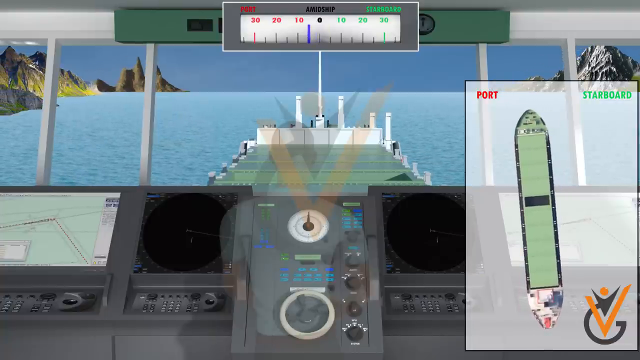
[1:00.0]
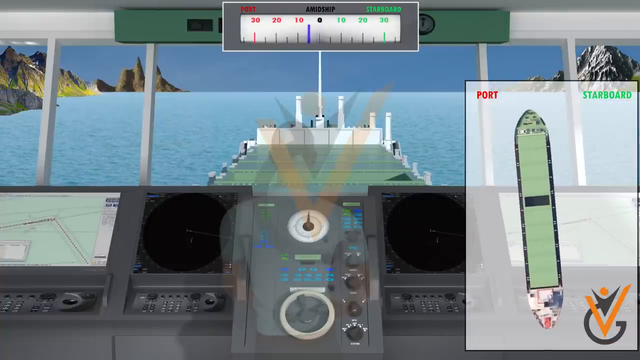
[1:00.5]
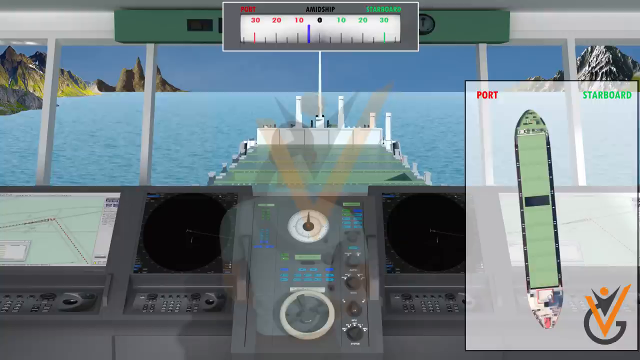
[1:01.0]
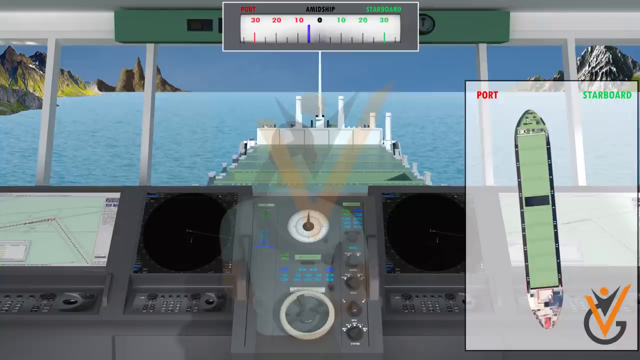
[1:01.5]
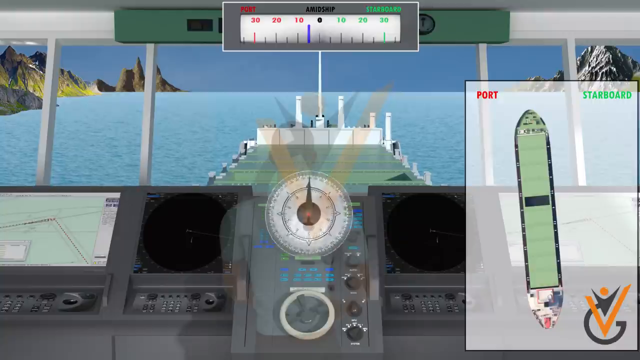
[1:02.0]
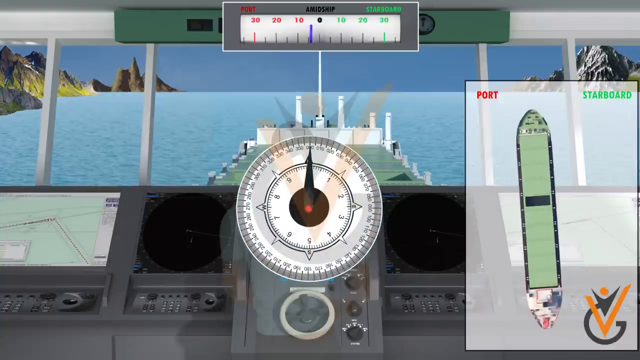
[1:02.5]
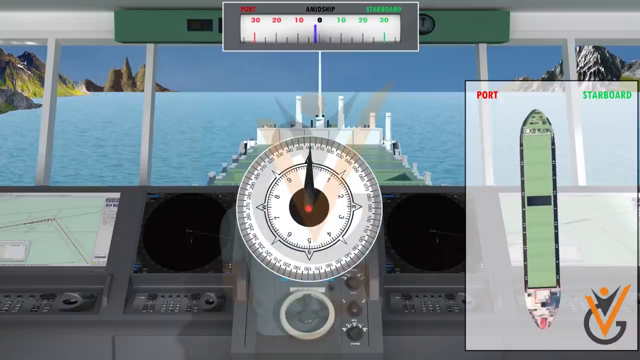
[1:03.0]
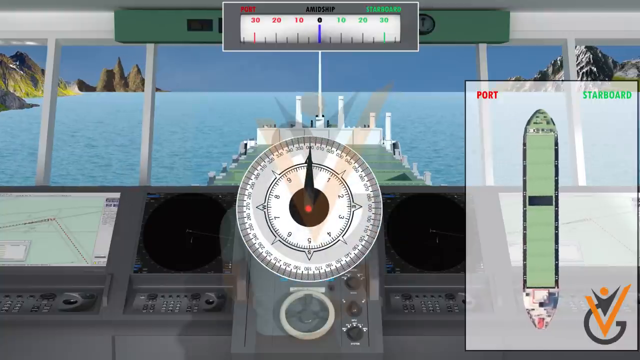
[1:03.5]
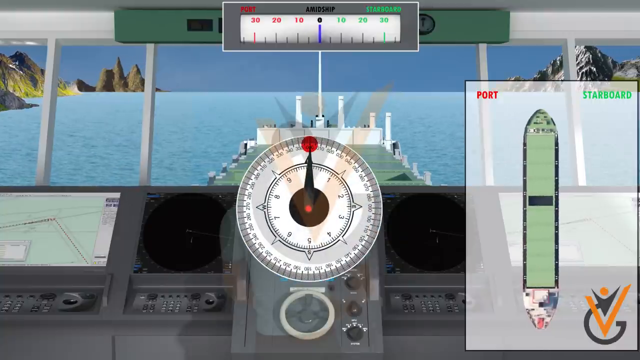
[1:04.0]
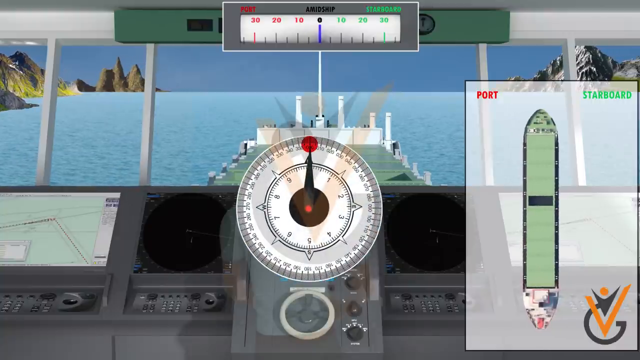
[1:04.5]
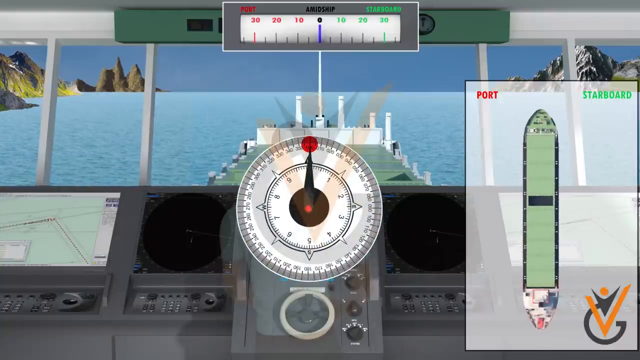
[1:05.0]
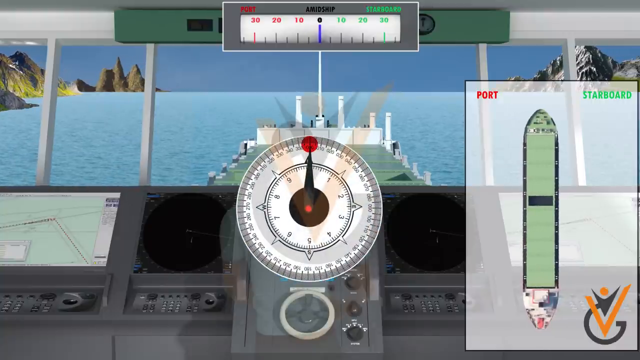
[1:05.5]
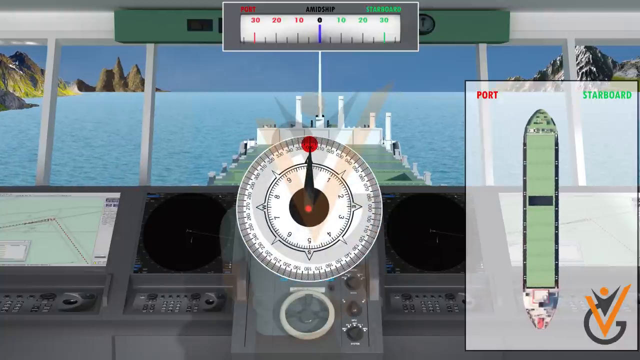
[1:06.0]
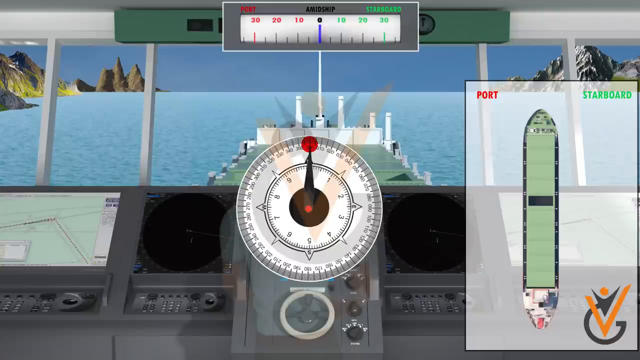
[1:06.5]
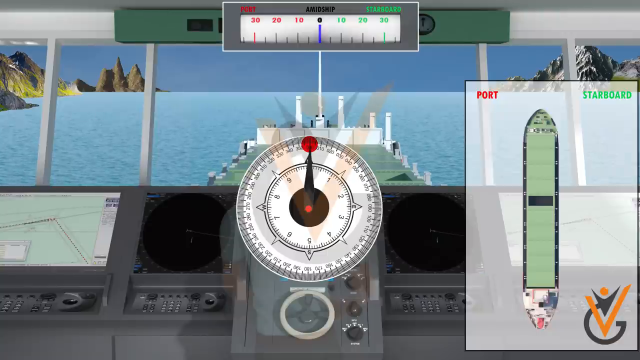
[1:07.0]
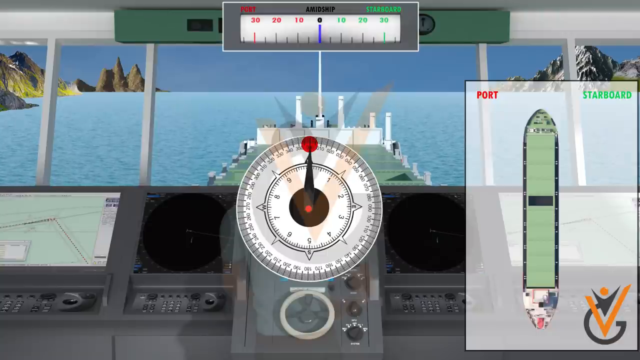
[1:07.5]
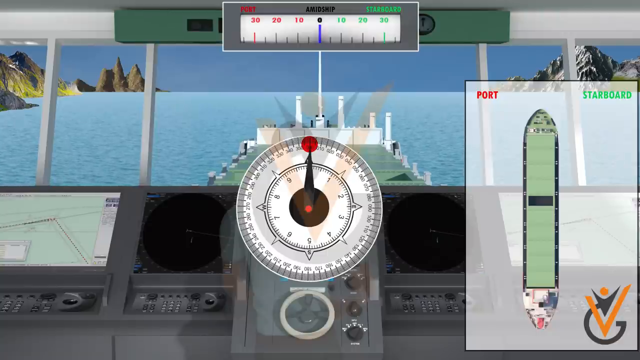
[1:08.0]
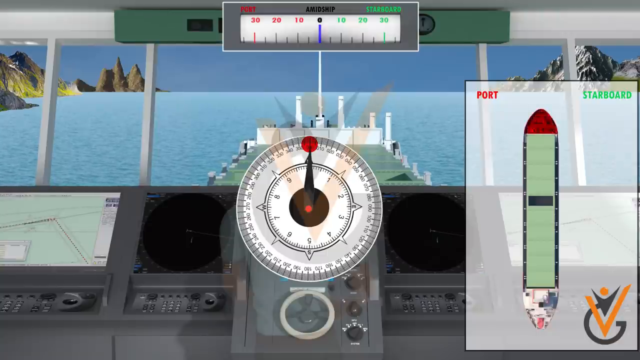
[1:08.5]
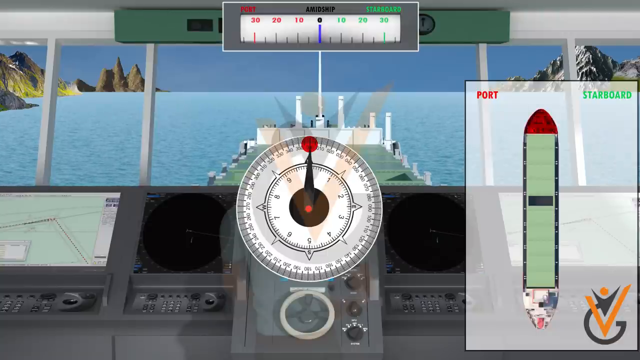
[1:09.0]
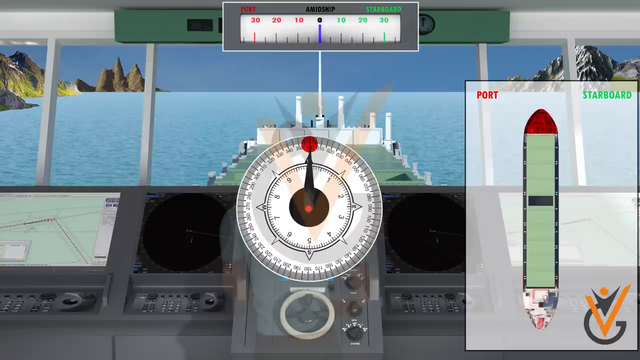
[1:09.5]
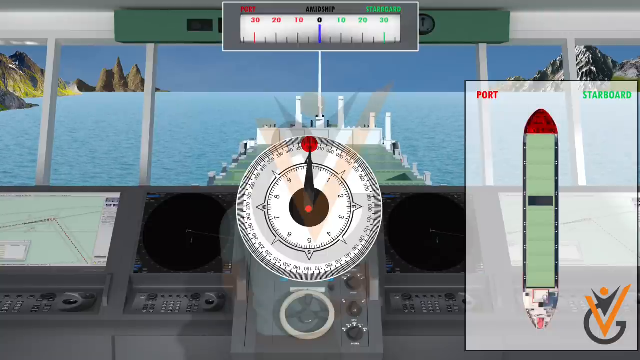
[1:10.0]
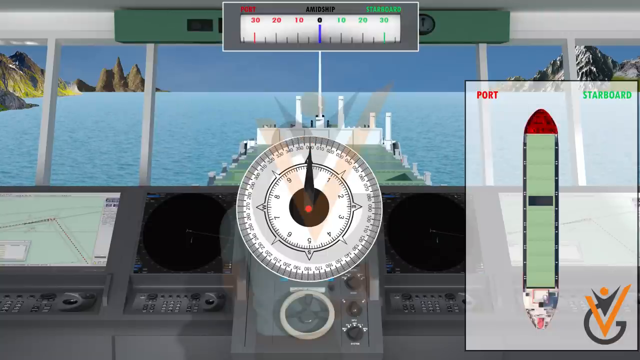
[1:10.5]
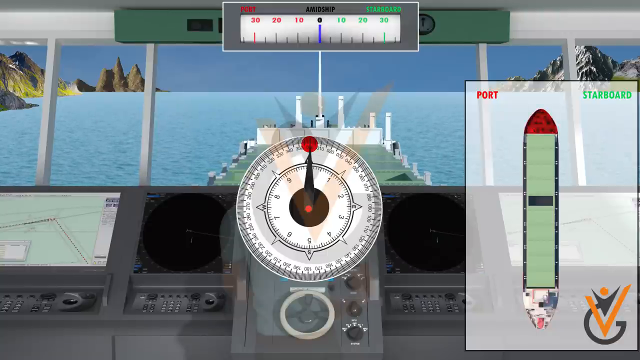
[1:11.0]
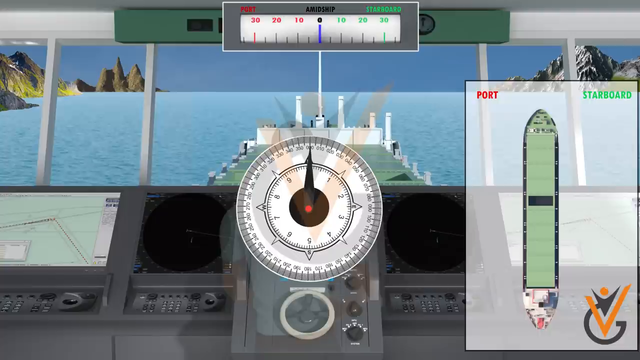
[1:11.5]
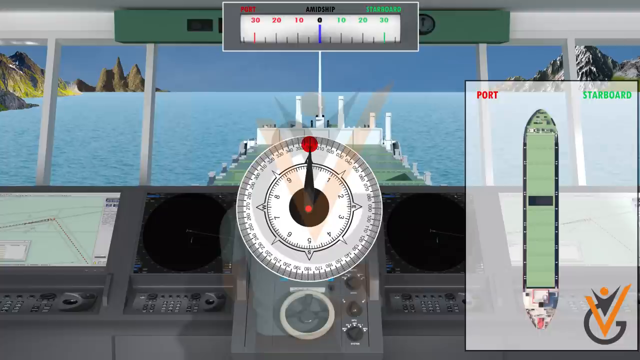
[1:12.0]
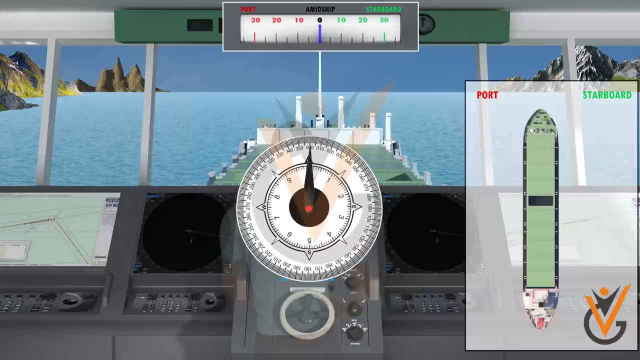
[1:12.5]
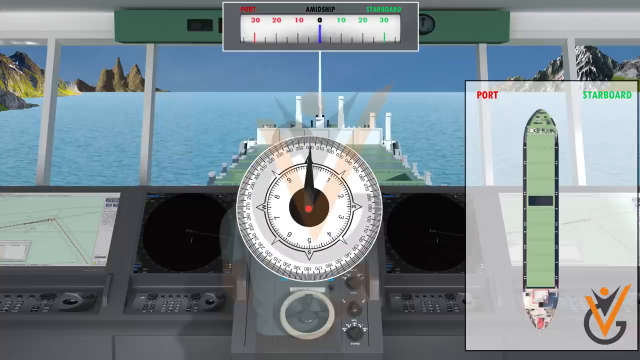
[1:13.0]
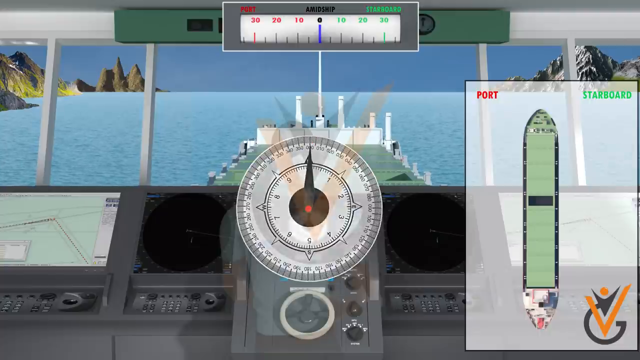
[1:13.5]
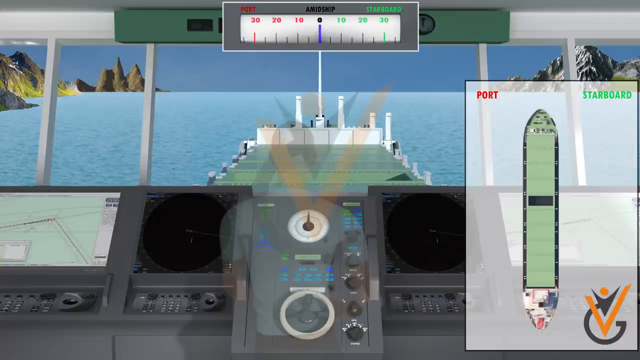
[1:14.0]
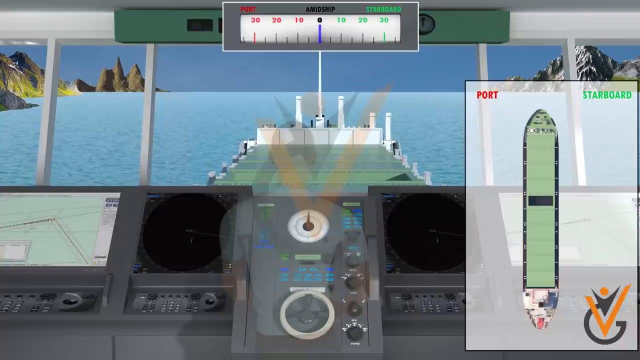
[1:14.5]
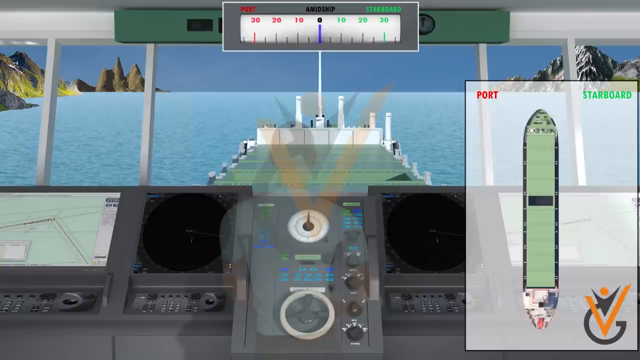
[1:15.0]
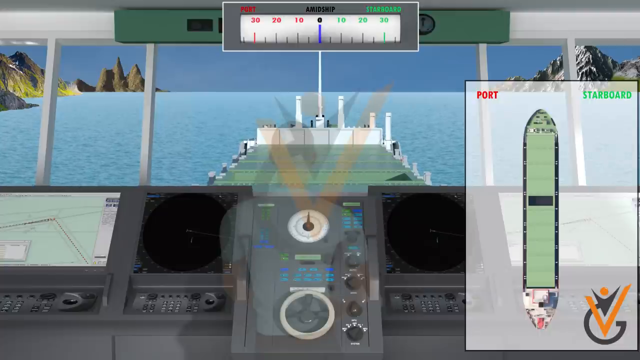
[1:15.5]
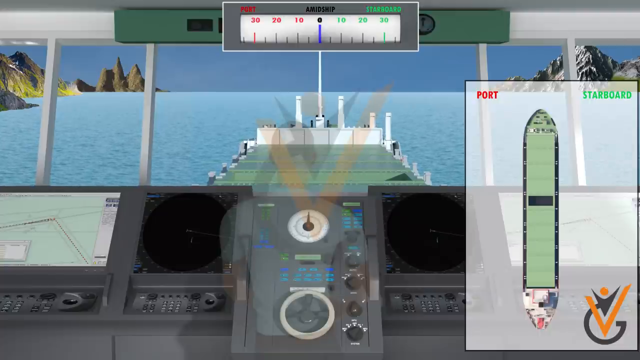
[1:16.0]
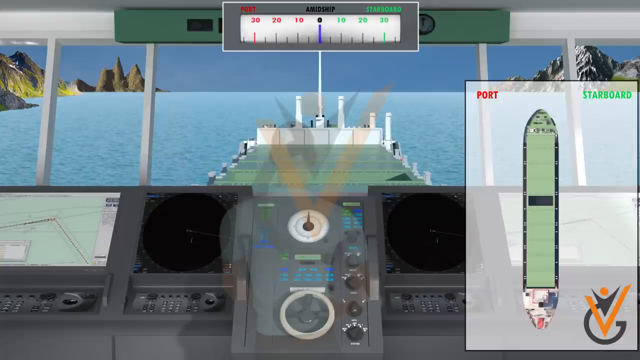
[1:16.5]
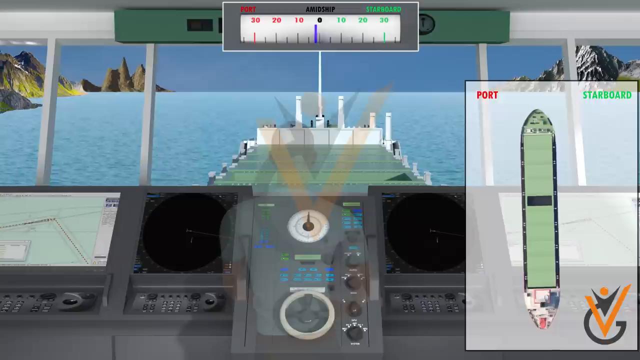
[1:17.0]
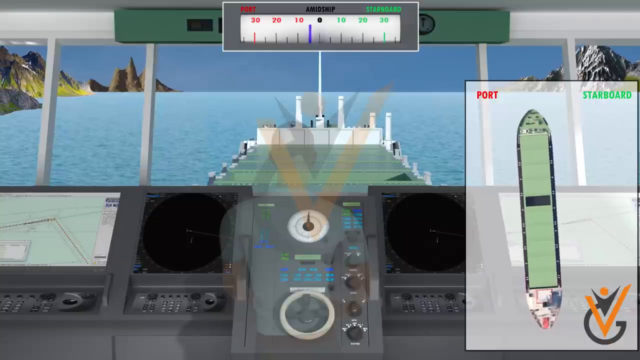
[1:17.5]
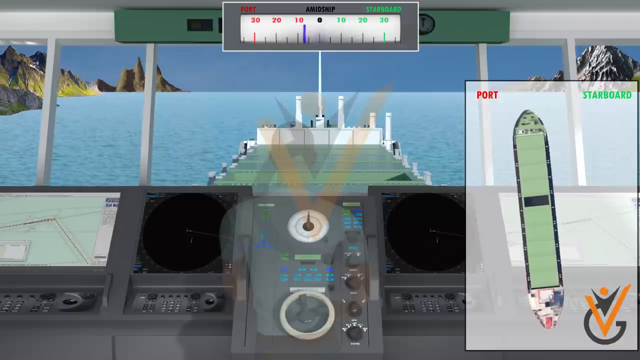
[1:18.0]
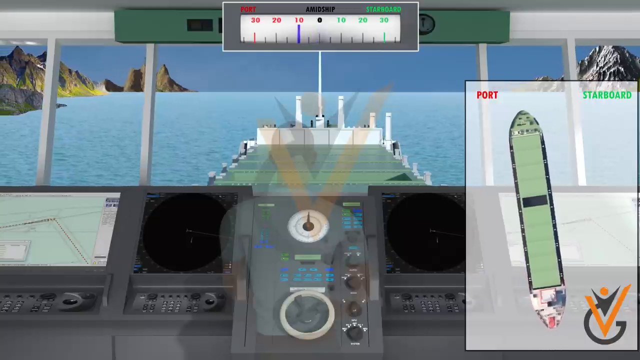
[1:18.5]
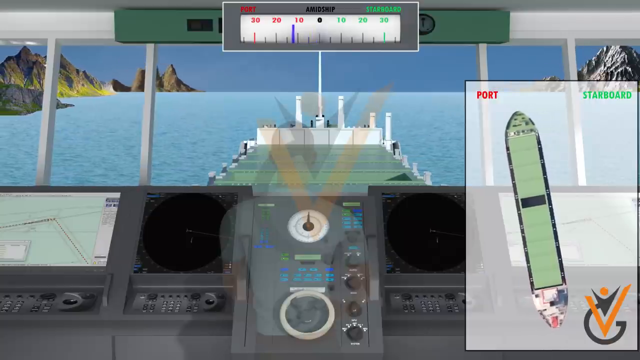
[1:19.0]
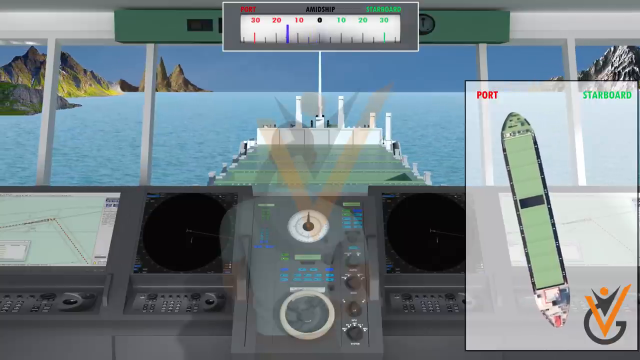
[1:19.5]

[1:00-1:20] A gauge on the steering column is highlighted in close-up to show exactly what it looks like, displaying its reading when the boat is going completely straight in one direction. On the right side of the screen the boat is straight at first, with a red area shaded at the top of the boat showing that part pointing exactly straight. The demonstration then shows the boat moving again from port to starboard on the left side of the screen. When the boat is going perfectly straight at the beginning, the gauge at the top of the screen is at zero, showing the boat is neither port nor starboard.